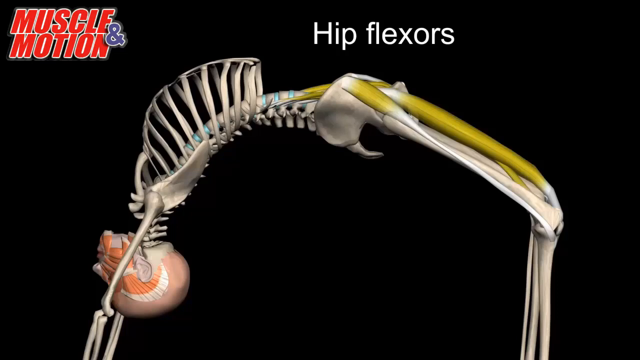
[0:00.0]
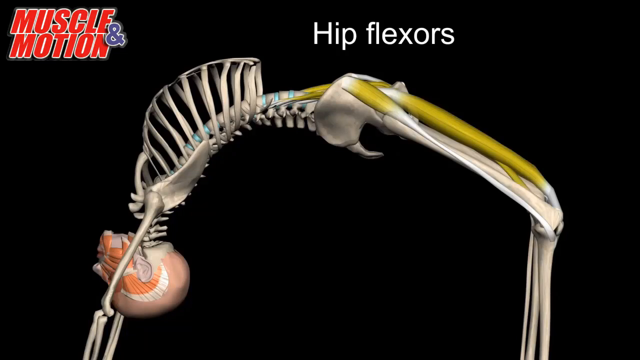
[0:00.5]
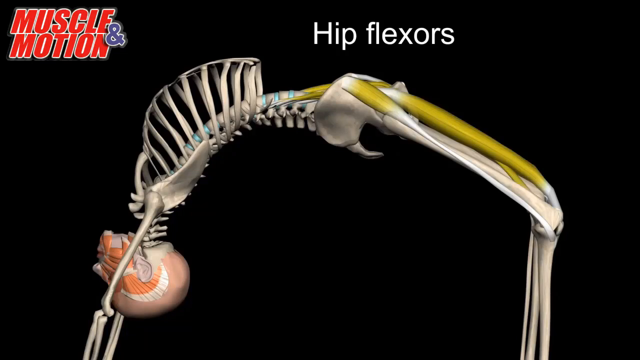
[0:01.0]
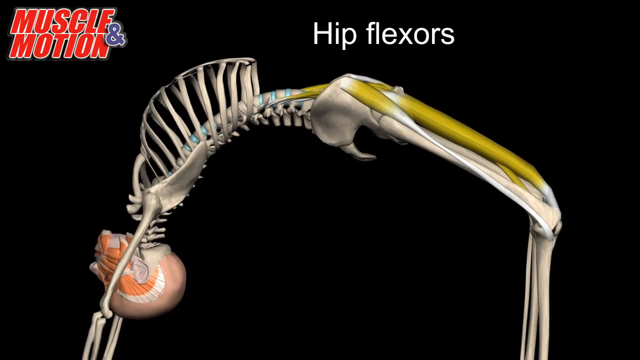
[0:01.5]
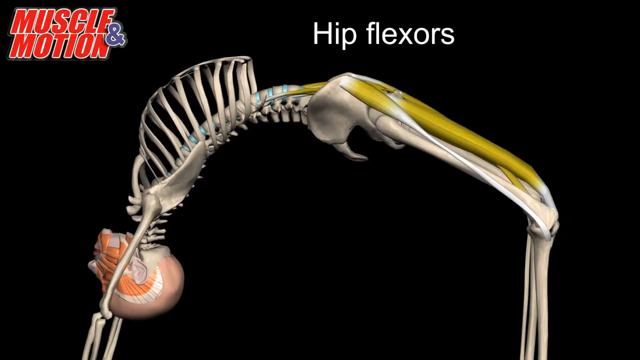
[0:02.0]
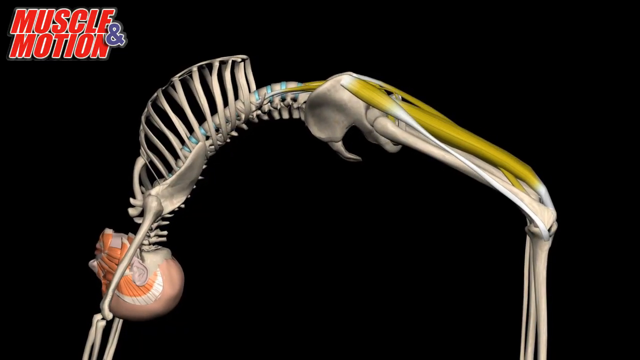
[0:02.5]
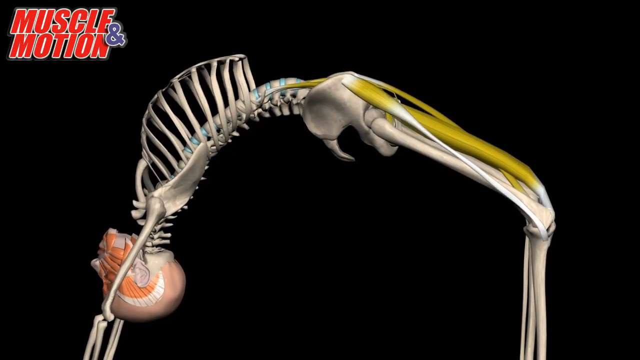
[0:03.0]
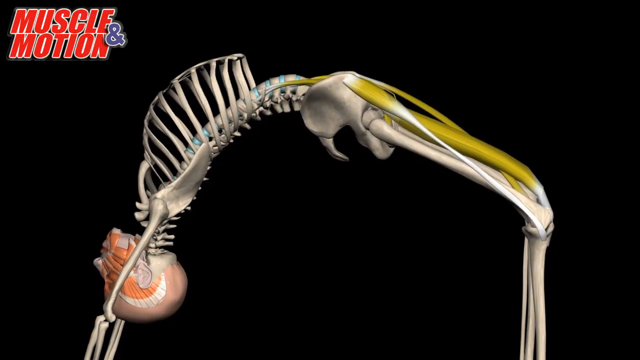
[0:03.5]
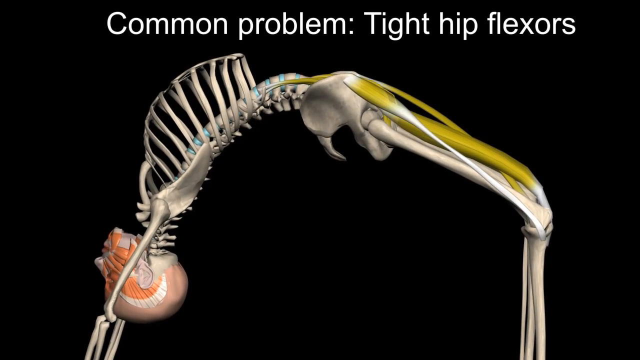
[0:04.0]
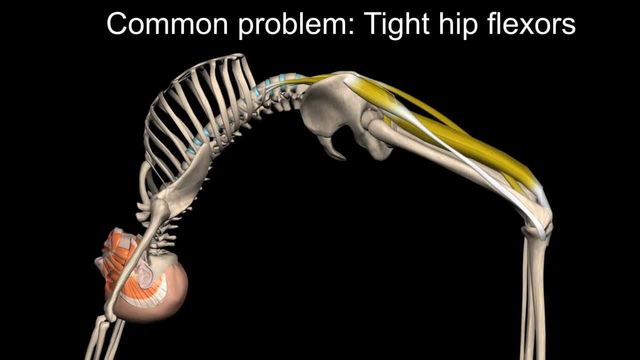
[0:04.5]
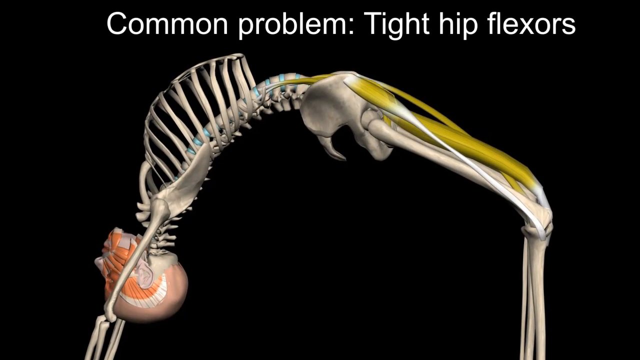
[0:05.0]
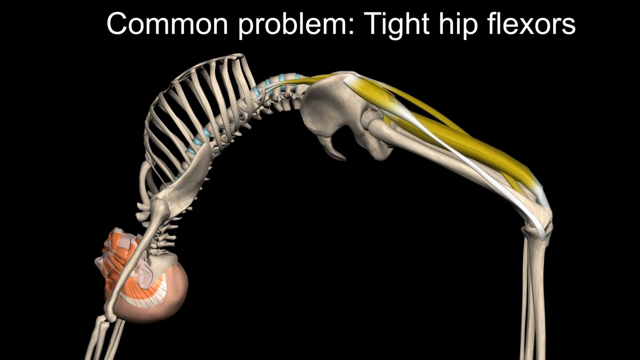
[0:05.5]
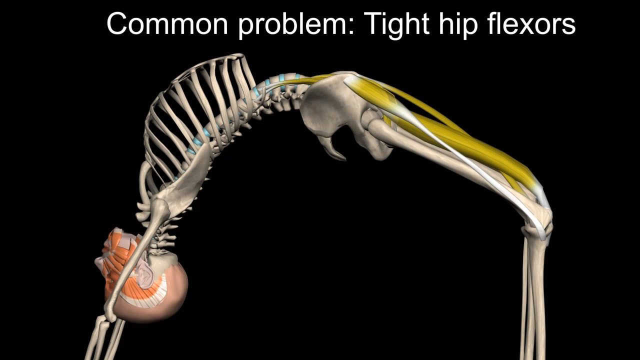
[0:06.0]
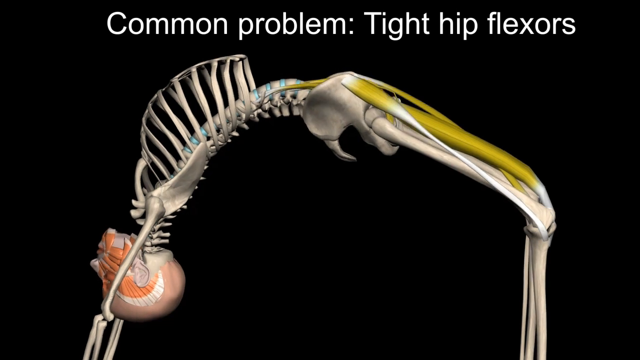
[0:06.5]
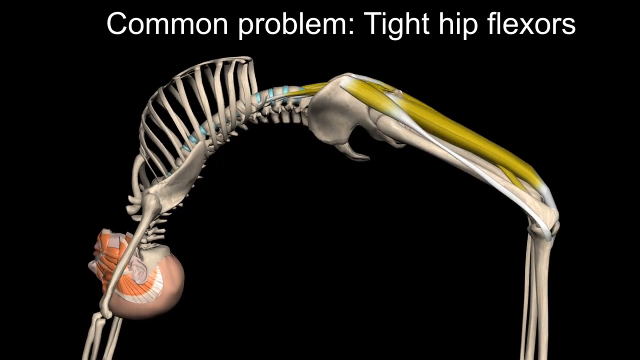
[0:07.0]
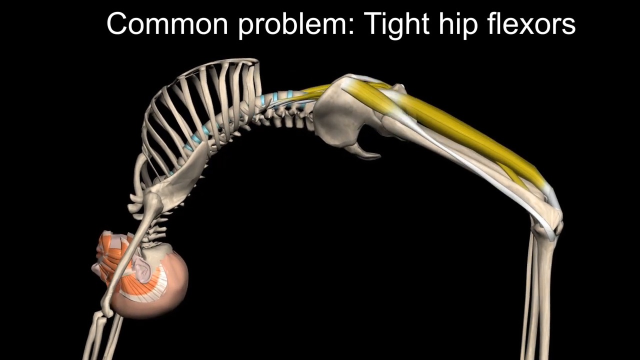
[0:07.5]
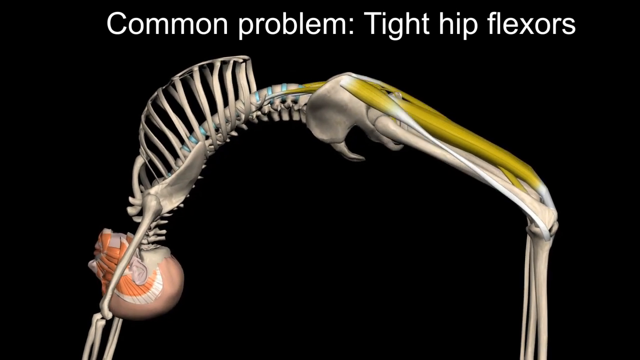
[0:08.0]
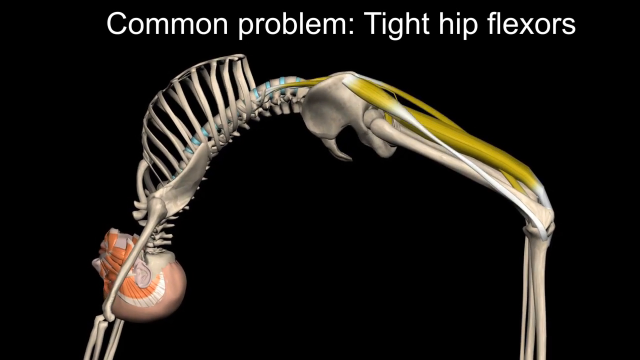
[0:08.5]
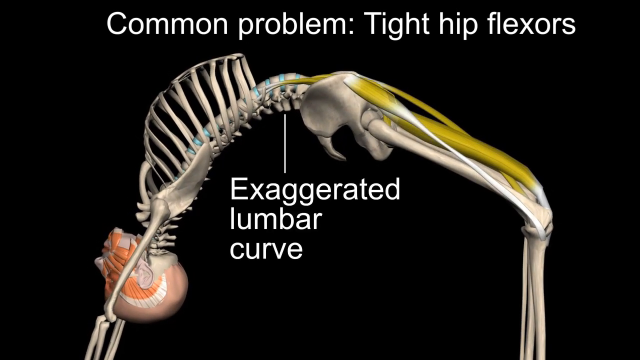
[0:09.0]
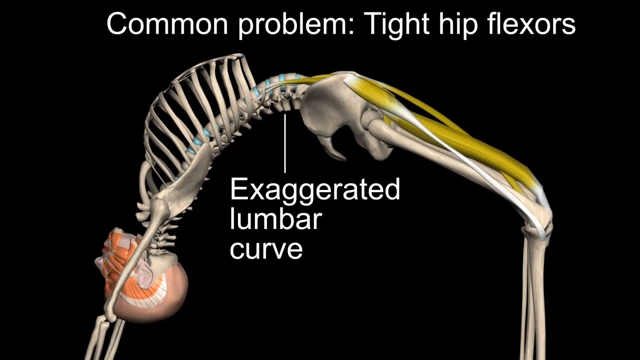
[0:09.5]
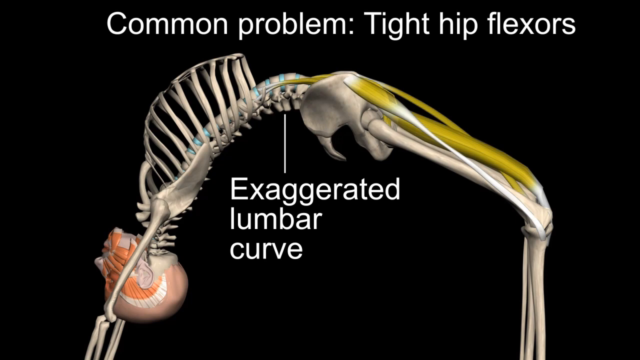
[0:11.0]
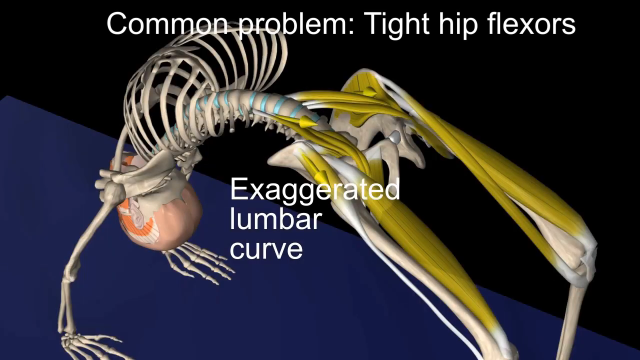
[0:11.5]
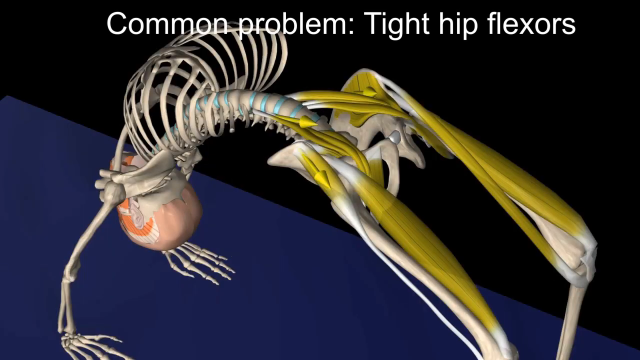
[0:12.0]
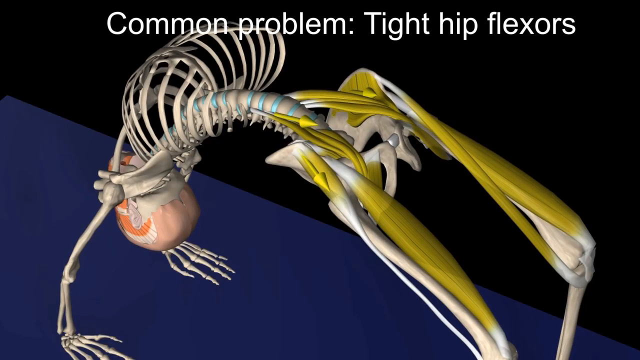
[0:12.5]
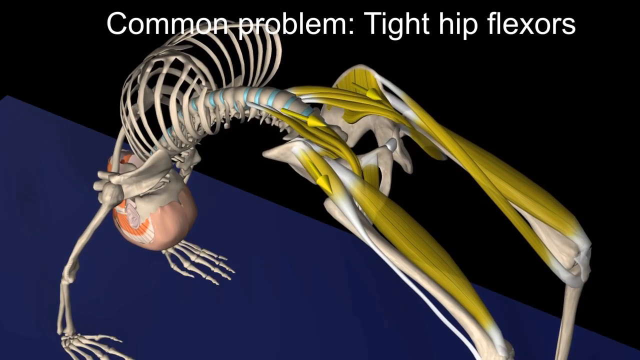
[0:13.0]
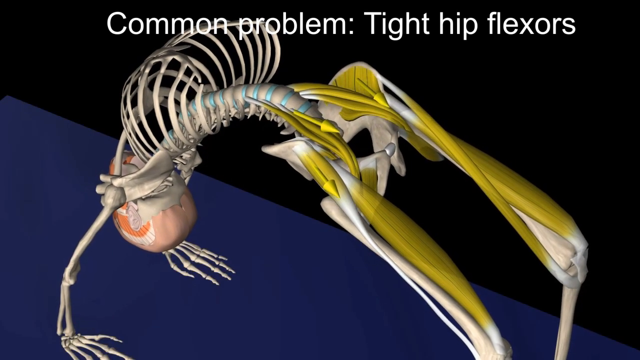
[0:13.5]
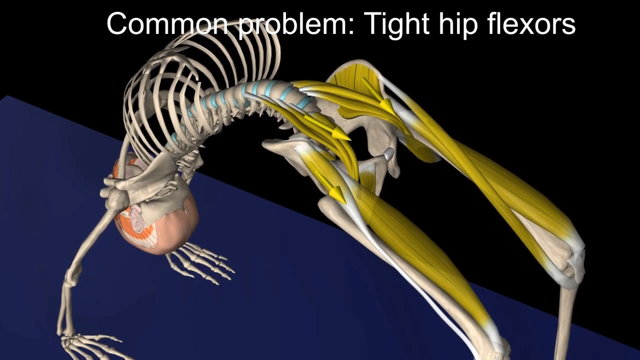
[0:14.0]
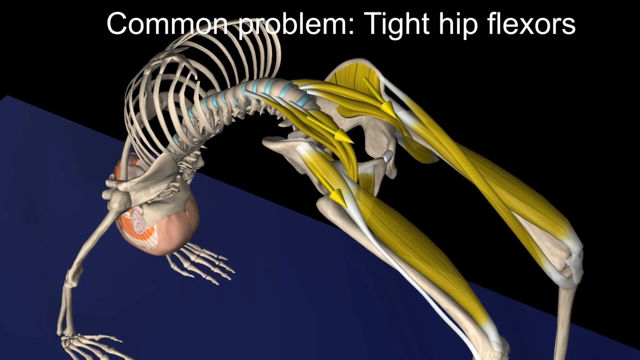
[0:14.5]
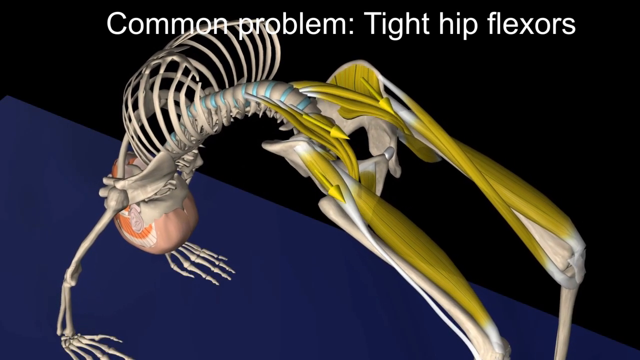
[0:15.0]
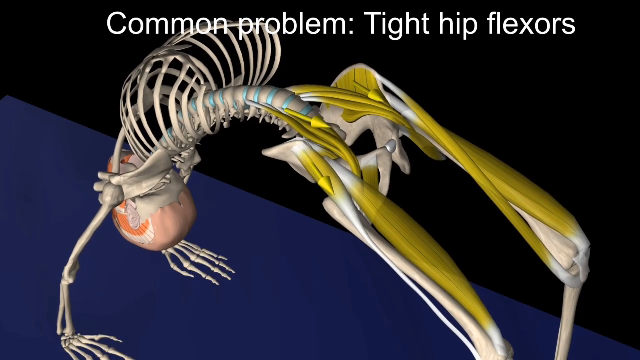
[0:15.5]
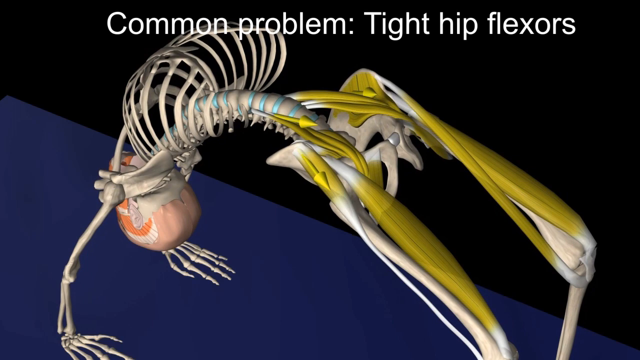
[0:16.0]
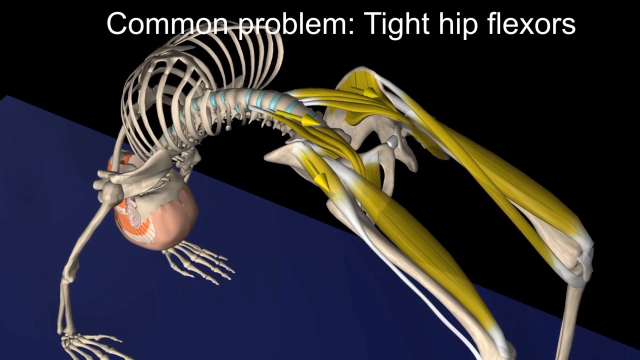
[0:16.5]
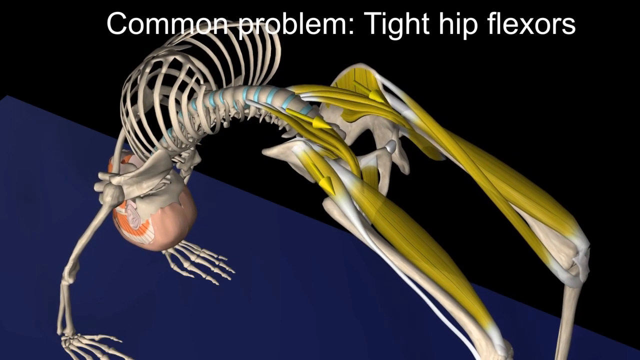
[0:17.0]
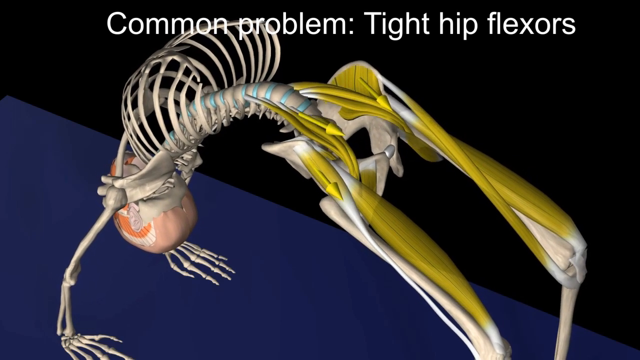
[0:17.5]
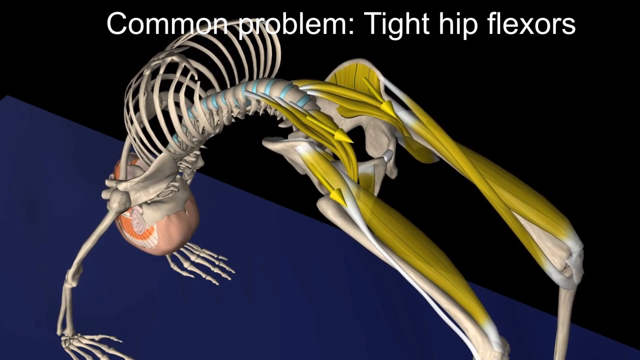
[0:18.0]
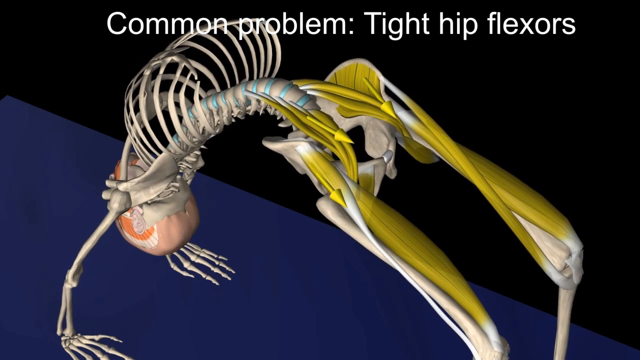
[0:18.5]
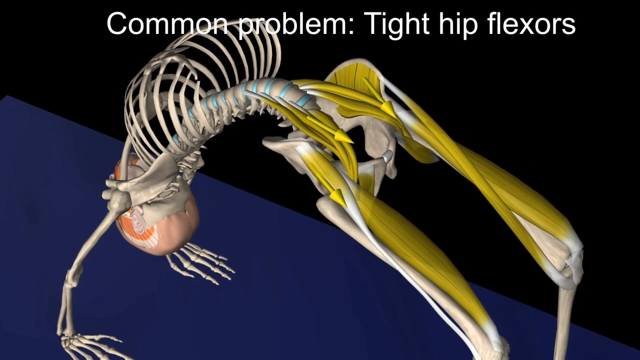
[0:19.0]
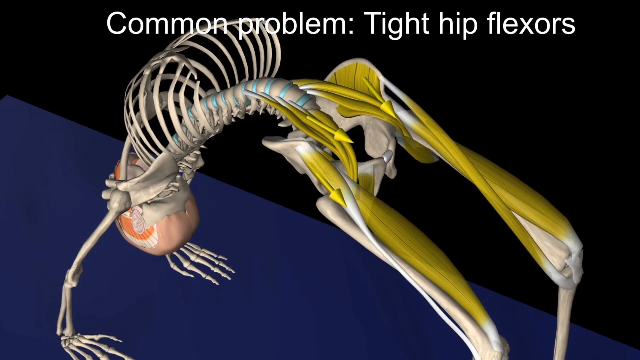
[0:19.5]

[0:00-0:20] A black background fills the frame, with a logo of red and blue text reading "muscle and motion" in the upper left corner. On the right side, at the top, white text reads "hip flexors". Below it is a 3D-generated image of a human skeleton, bent facing backwards and upside down, with its hips and thighs highlighted in yellow. As the rest of the text disappears, white text appears at the top reading "Common problem: Tight hip flexors", and the 3D skeleton model flexes its hips upwards. As the skeleton thrusts its pelvis up, more white text appears reading "Exaggerated lumbar curve", with a white line pointing to the problem area under the skeleton. The view changes to a closer overhead angle, and the skeleton thrusts its hips a few more times.